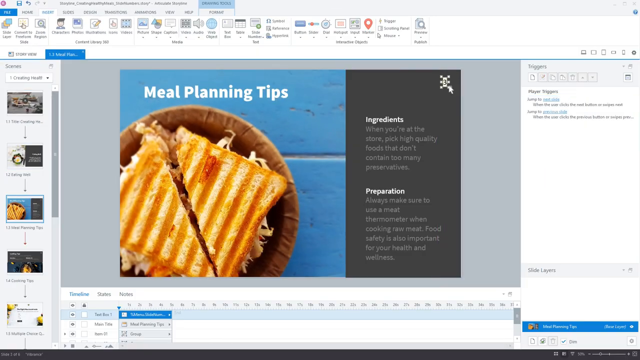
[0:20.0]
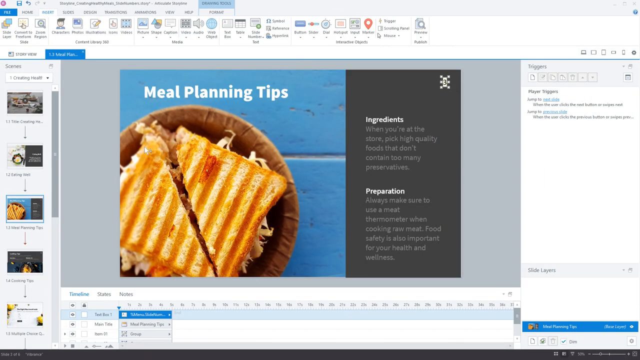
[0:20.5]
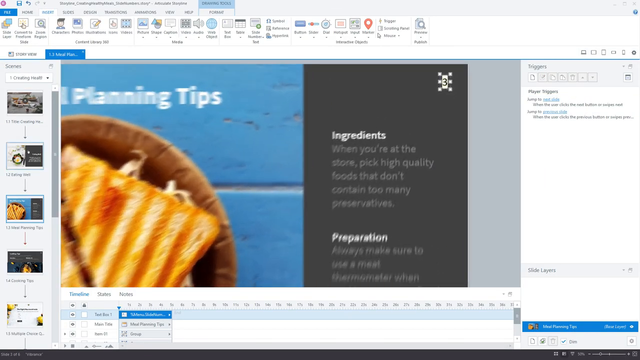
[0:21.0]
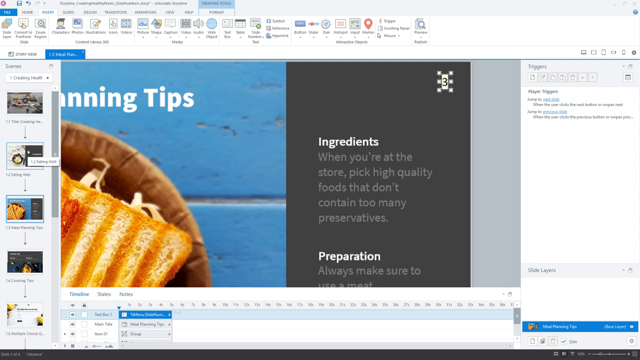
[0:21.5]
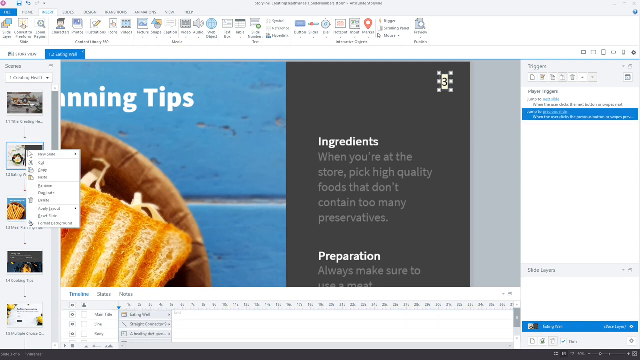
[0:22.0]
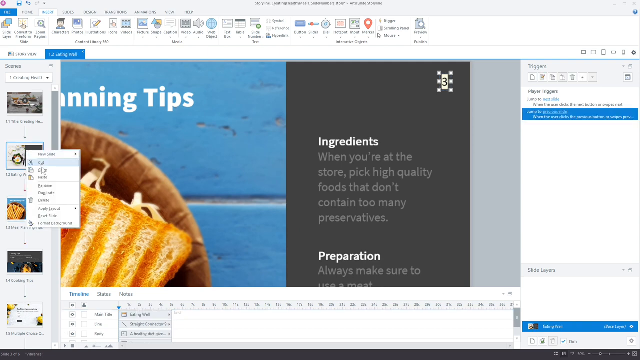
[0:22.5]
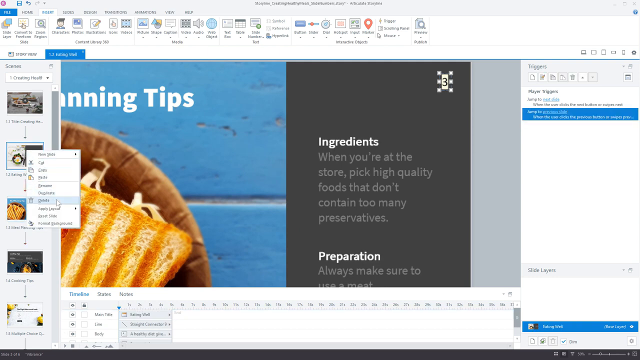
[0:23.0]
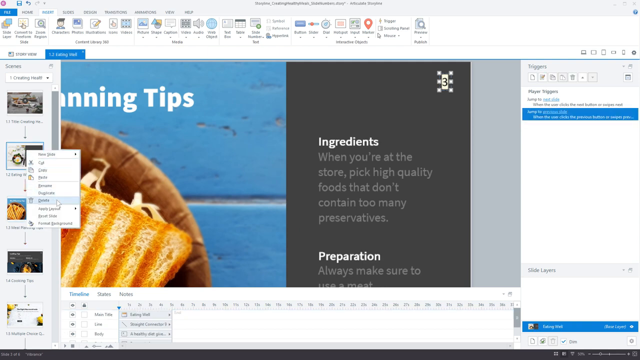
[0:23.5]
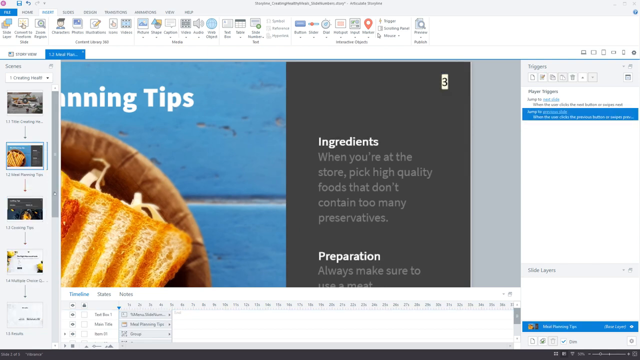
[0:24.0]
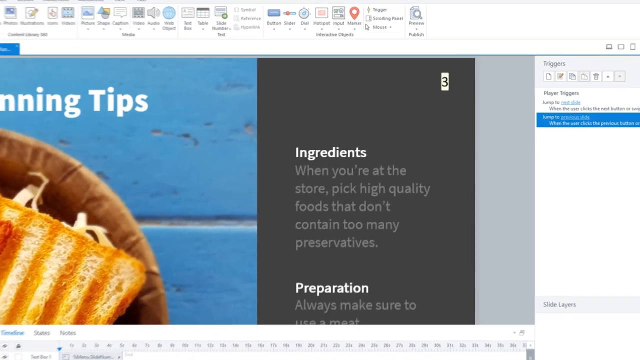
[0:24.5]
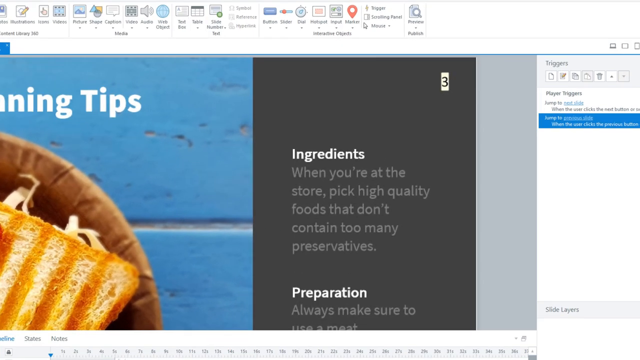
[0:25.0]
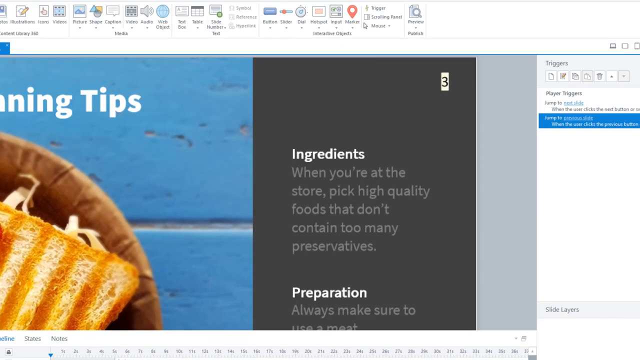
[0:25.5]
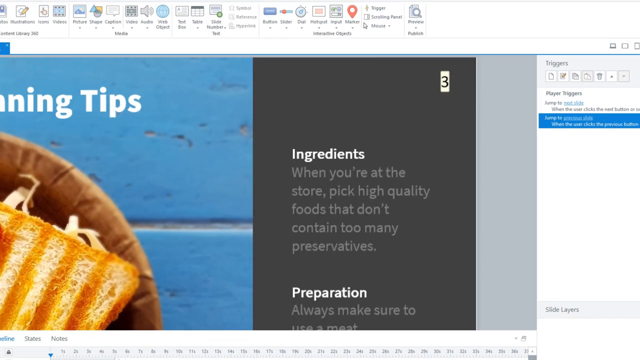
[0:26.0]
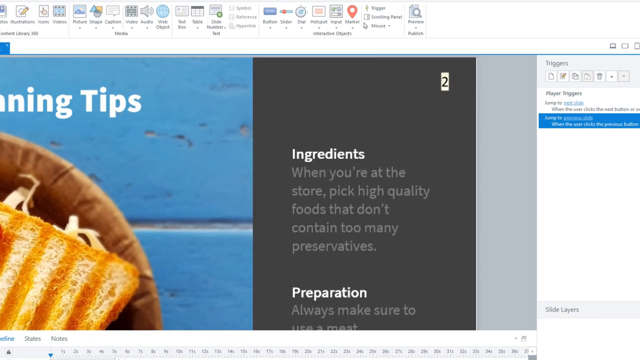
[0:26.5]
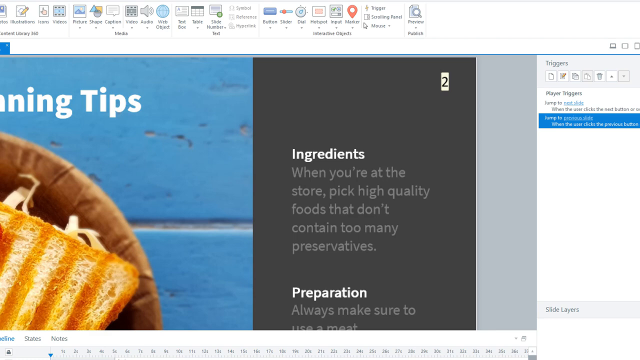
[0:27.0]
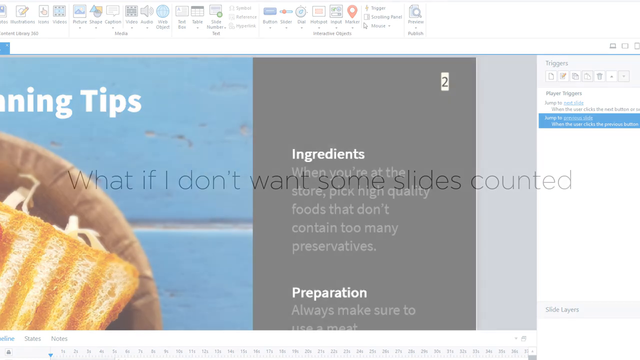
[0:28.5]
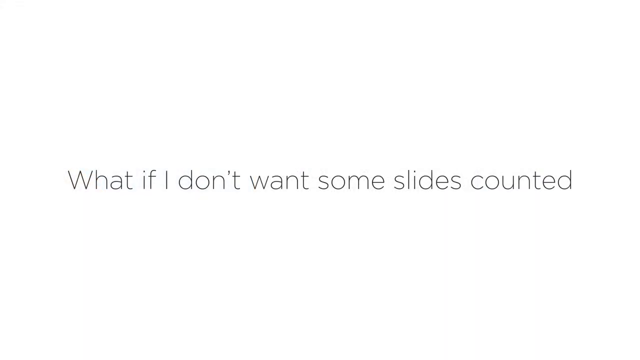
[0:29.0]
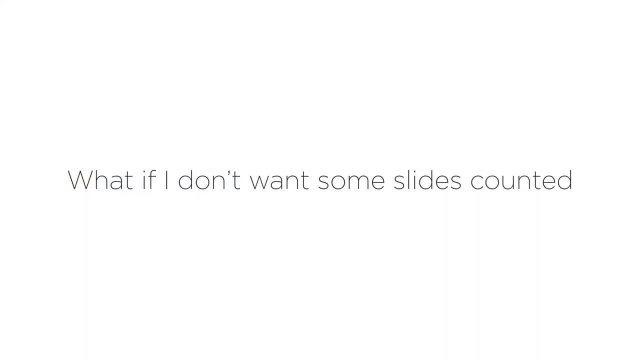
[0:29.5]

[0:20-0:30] The meal planning tips slide shows a toasted sandwich on a brown plate in front of a blue backdrop. On the left of this image is white text about ingredients and preparation in front of a gray backdrop. The user removes a slide and changes a page number from 3 to 2.